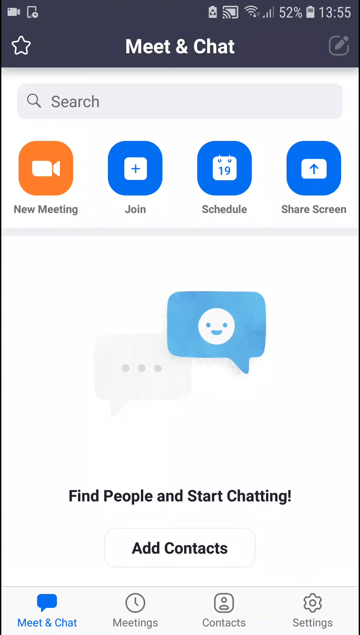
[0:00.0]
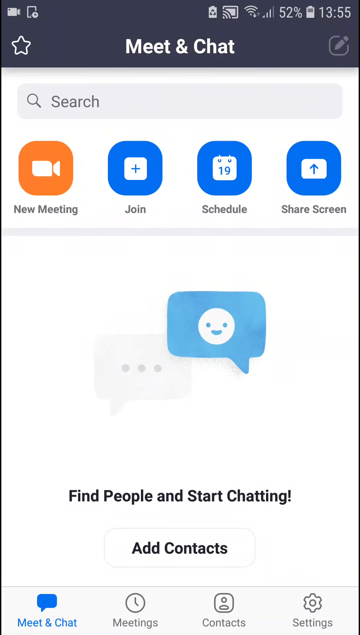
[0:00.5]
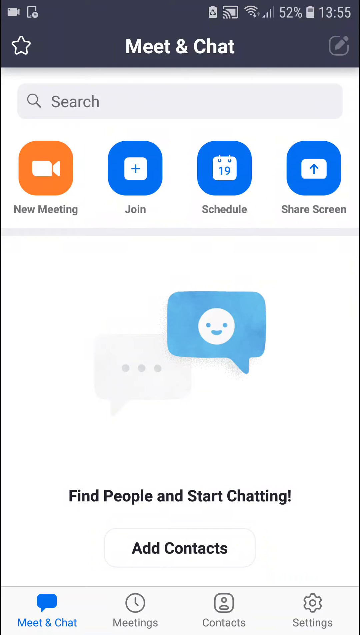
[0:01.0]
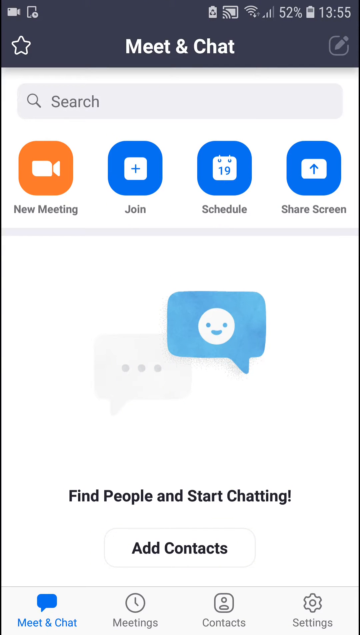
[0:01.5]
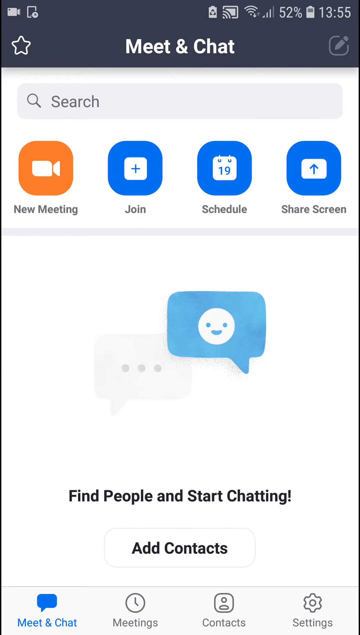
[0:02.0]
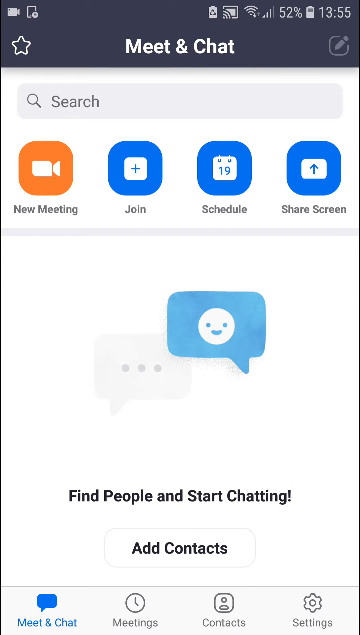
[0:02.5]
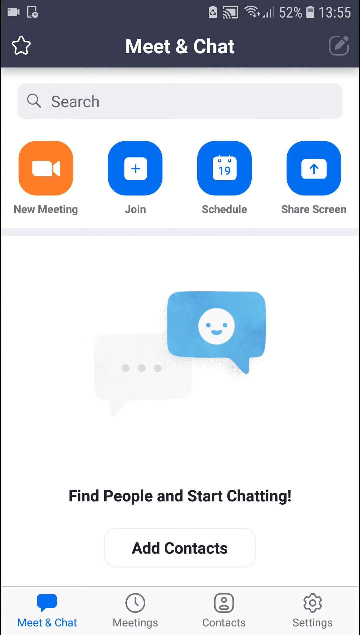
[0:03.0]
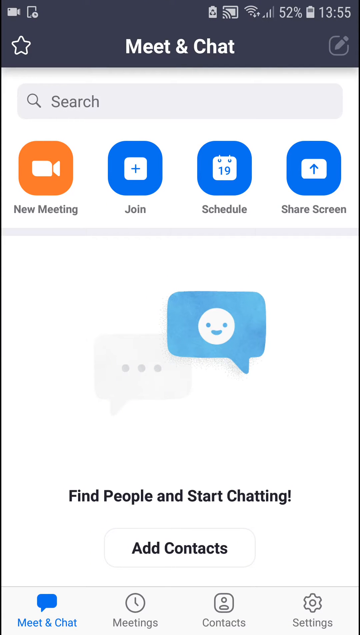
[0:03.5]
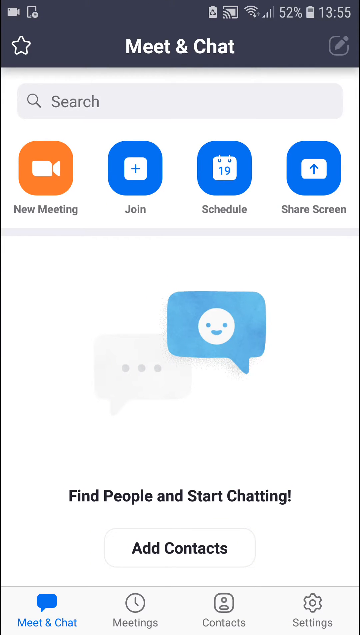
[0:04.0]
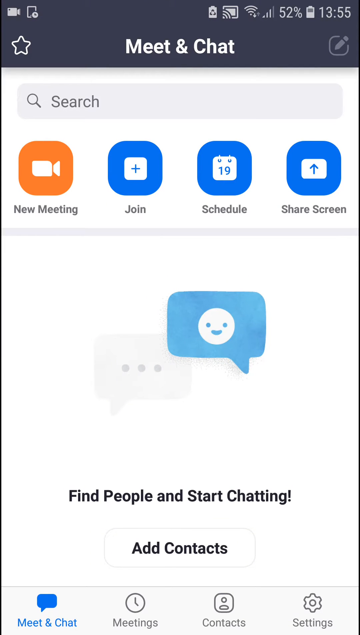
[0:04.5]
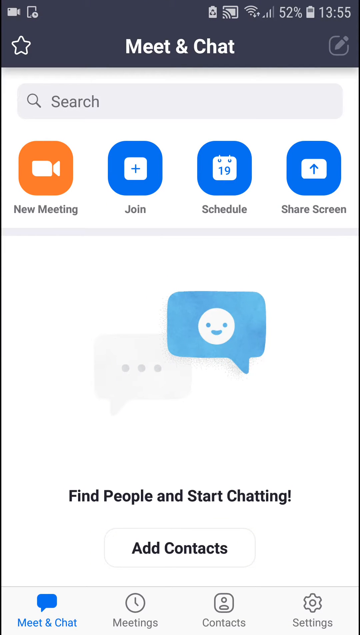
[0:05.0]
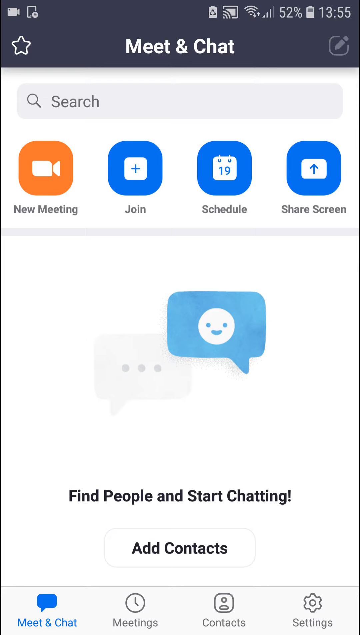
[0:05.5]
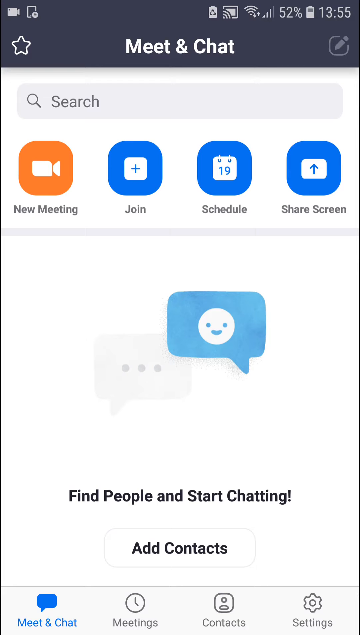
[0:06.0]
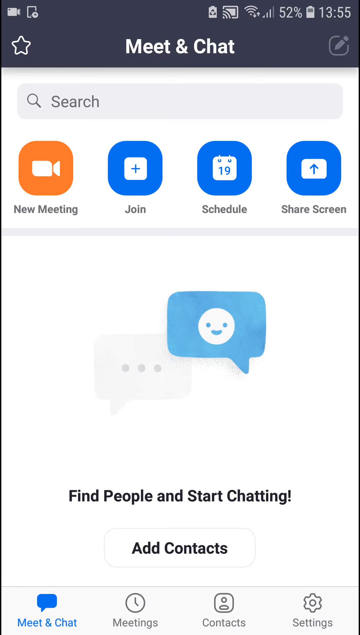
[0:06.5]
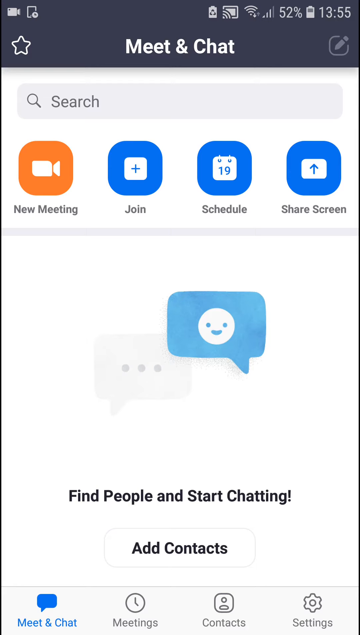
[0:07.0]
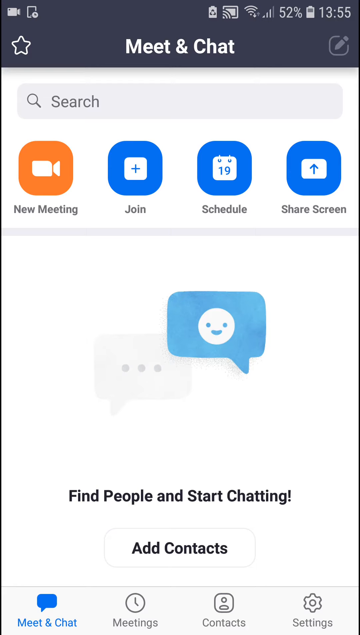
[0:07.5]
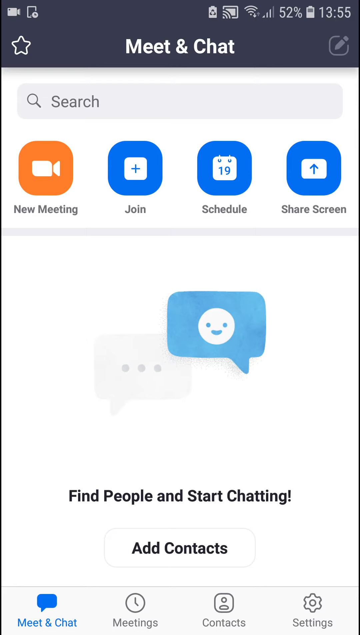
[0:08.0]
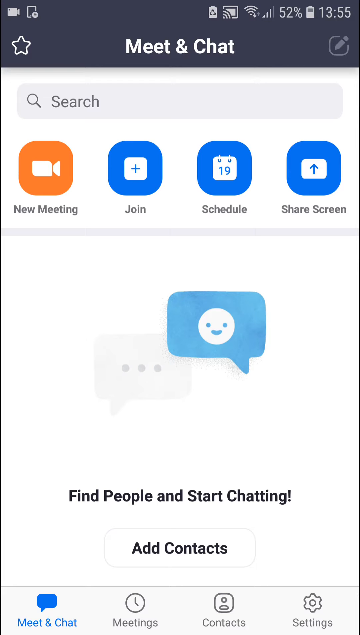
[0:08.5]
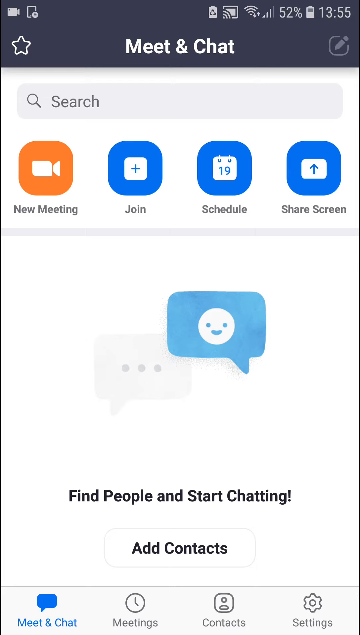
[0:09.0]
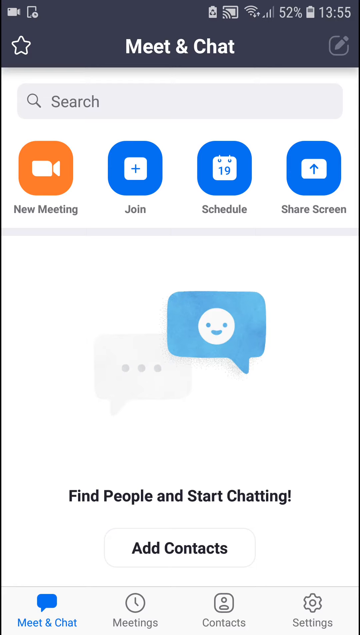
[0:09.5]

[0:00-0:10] The video shows a chat program called Meet & Chat on a phone screen. There is a "New Meeting" option with an orange square, and Join, Schedule and Share options with blue squares, along with options to find people, start chatting and add contacts. The phone has 52% battery and the time is 13:55. No chat is in progress. In the middle of the screen there is a rectangle with a white chat icon with a smiley face. At the bottom of the screen are different menus, shown as a clock, people and a gear. There is also a star at the top in white. The app itself is dark blue; the meeting chat text is white and all other text is black.